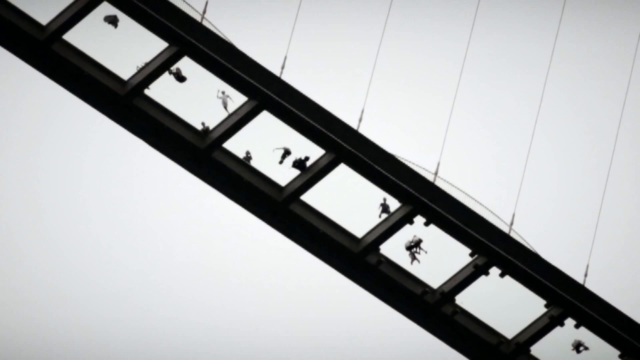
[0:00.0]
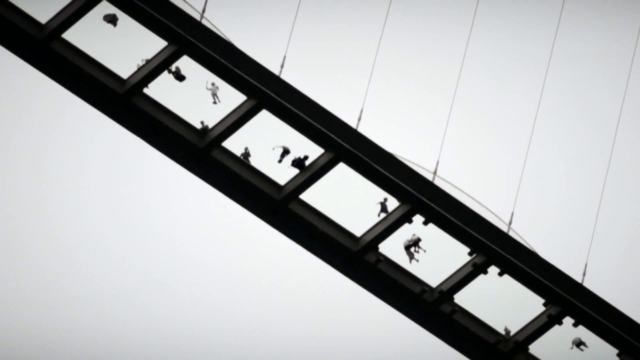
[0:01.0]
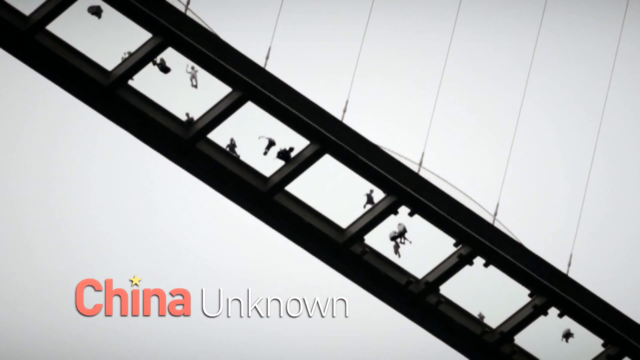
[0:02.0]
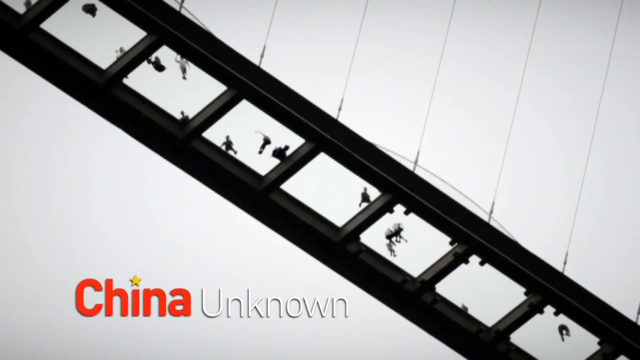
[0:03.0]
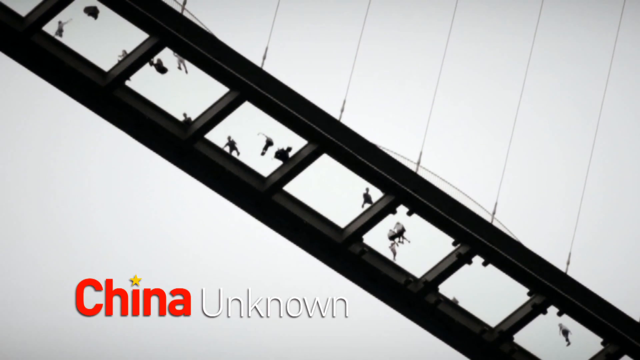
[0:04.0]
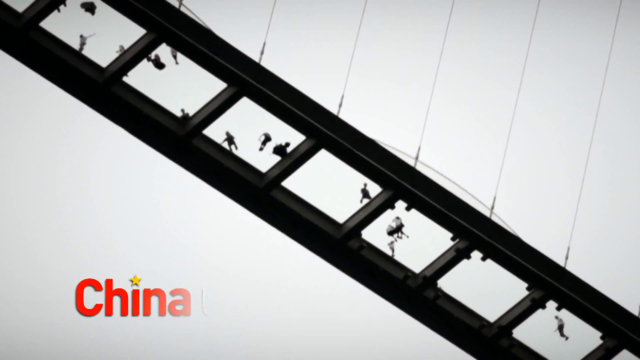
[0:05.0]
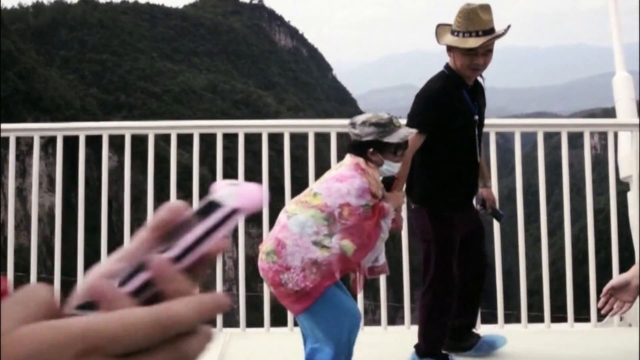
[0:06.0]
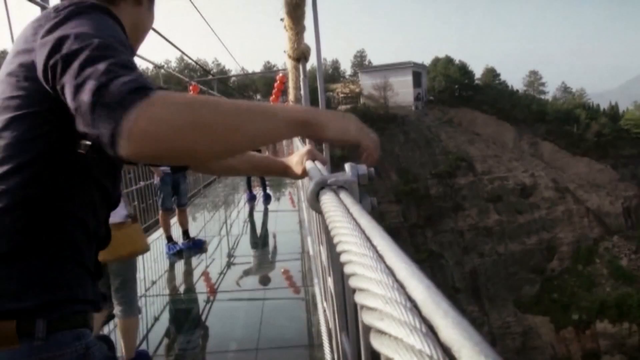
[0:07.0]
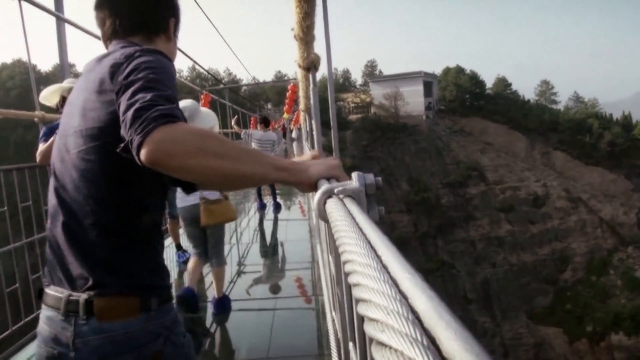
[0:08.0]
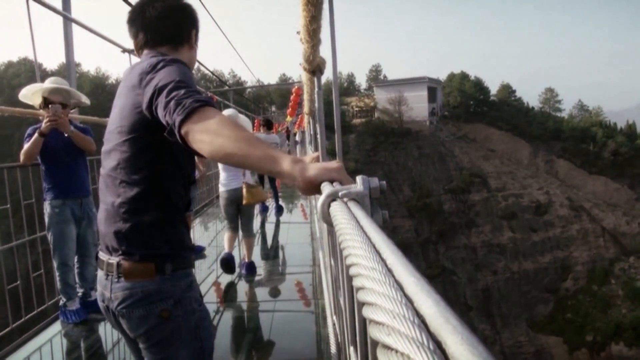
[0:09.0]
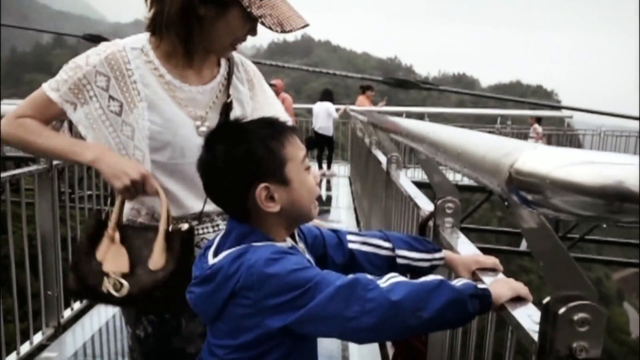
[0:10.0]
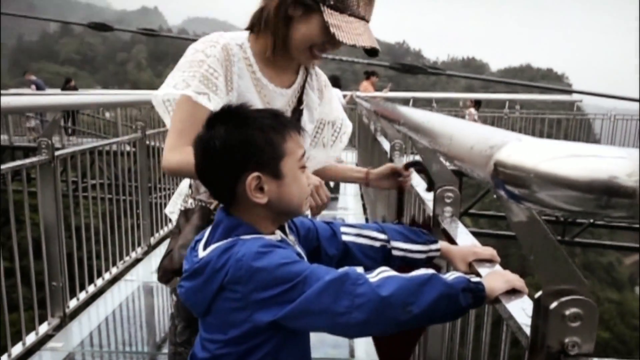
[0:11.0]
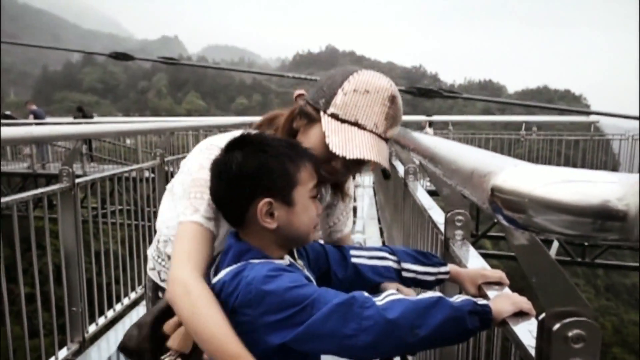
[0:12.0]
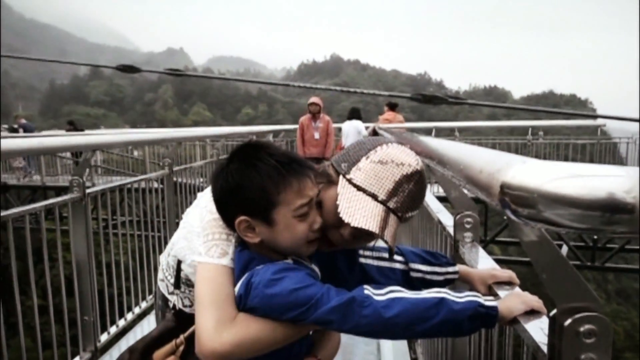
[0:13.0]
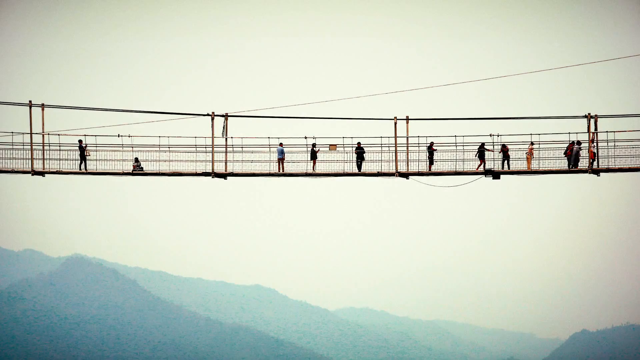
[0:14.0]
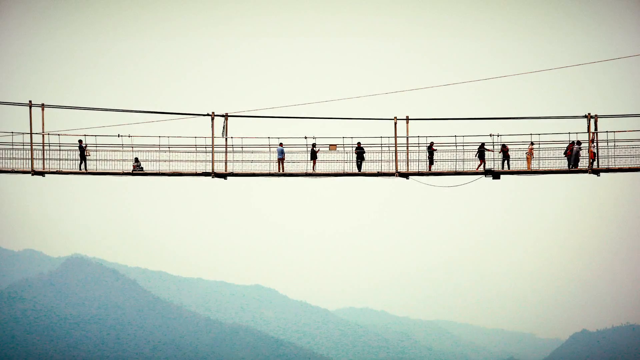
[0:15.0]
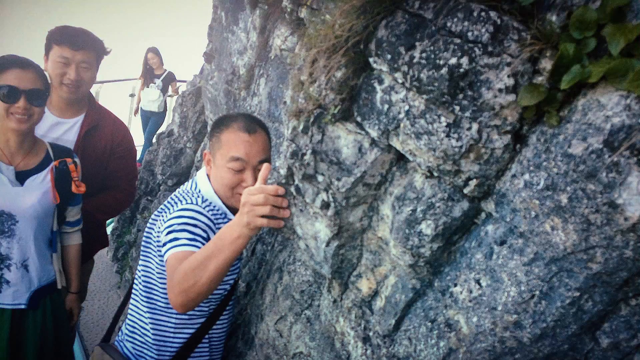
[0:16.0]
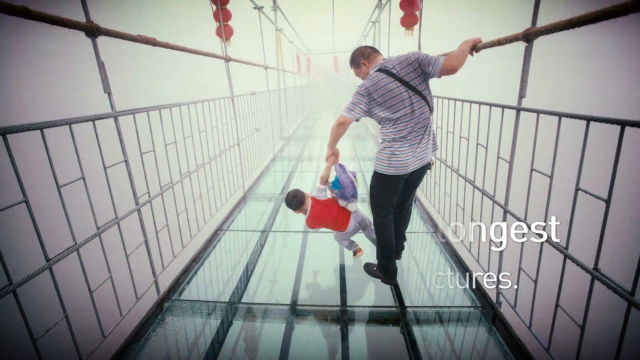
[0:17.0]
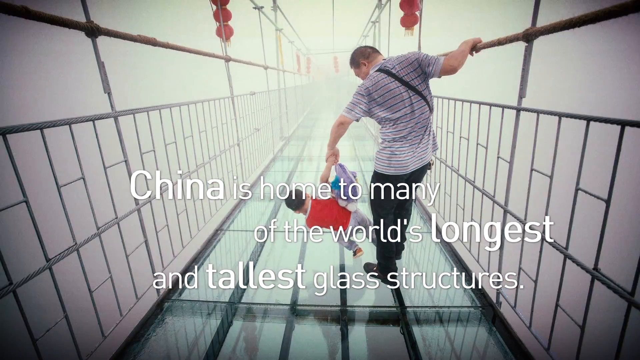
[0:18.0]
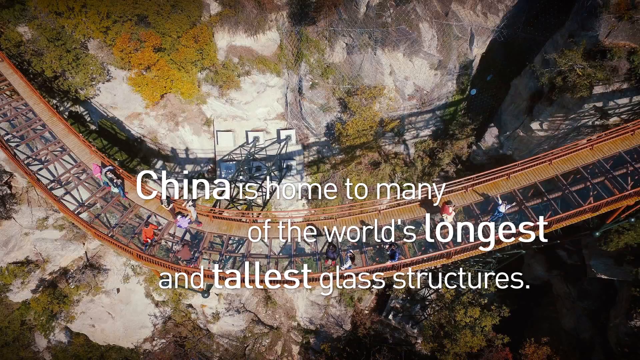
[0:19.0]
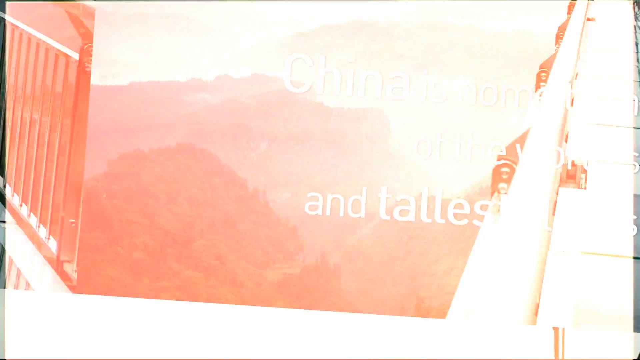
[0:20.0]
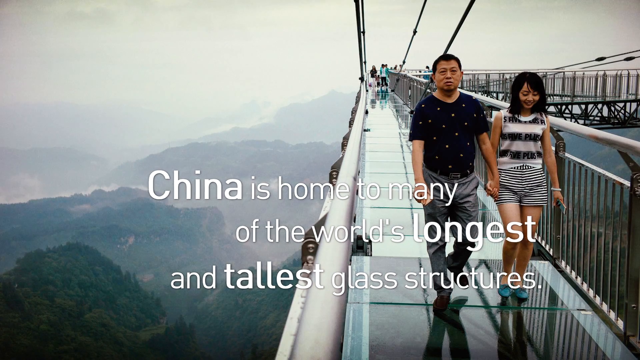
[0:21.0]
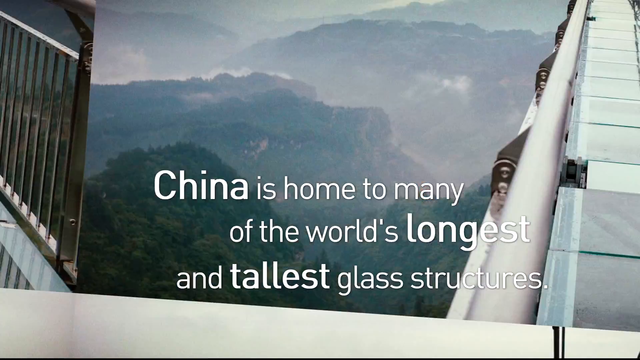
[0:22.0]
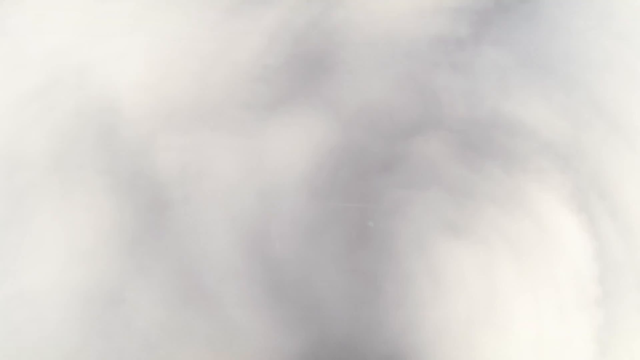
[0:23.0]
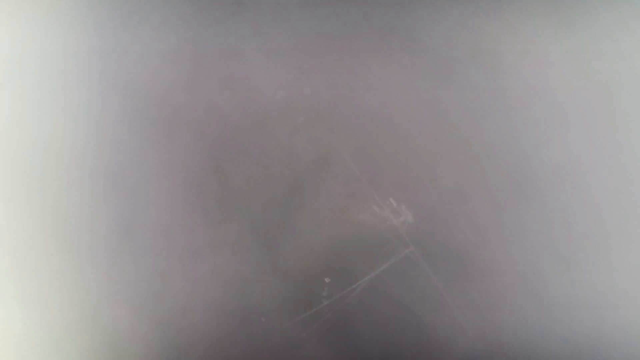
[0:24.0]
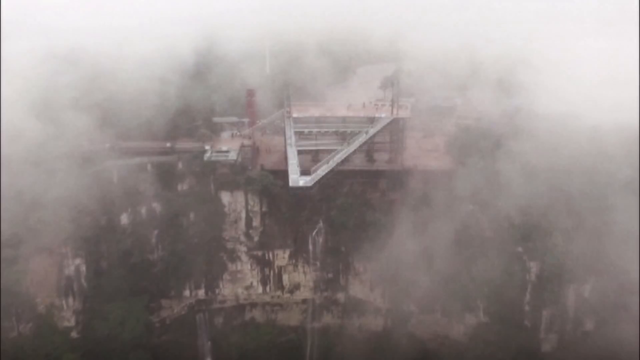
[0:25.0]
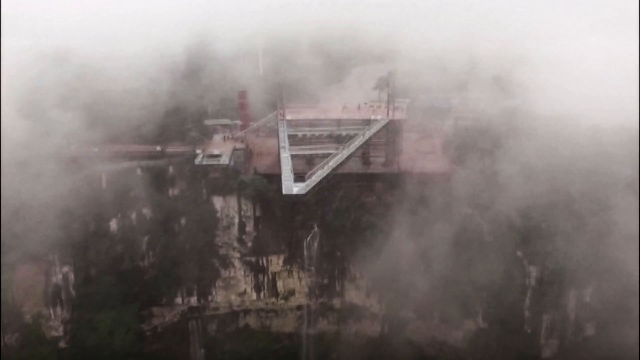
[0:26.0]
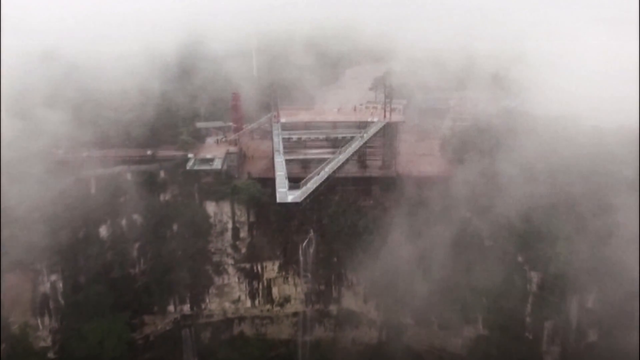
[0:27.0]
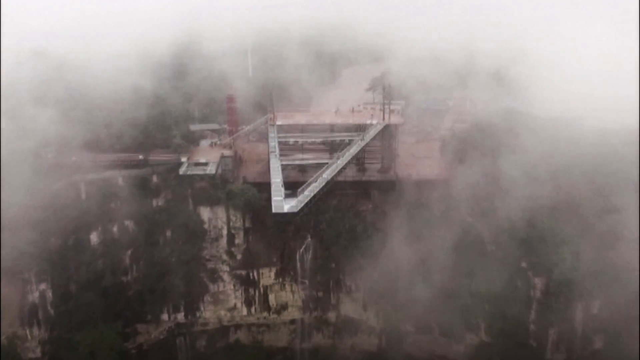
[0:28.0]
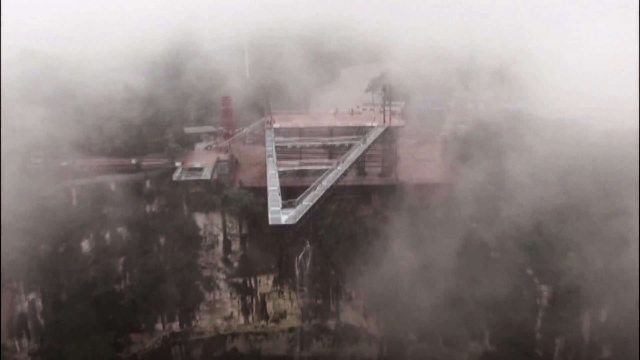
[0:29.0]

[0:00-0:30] People walk over a bridge with a glass bottom, and text below reads "China Unknown." The people walking across look down, and the video cuts to another shot of people walking across the bridge. People are very timid and scared to walk over it, since it is just glass. A child cries while holding on to the ledge, afraid of what is below him. Next comes a shot of people walking across holding rocks, followed by a man walking across the glass-bottomed bridge, holding the arm of his child, who is scared and wearing red. Text reads "China is home to many of the world's largest, longest, and tallest glass structures." The video cuts to a bridge area with a glass floor spinning and curving around a large rock, then to a man holding a woman's hands as they walk across the bridge, with text reading "China is home to many of the world's longest and tallest glass structure."